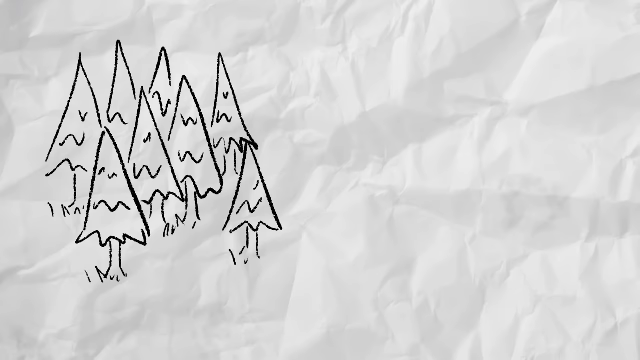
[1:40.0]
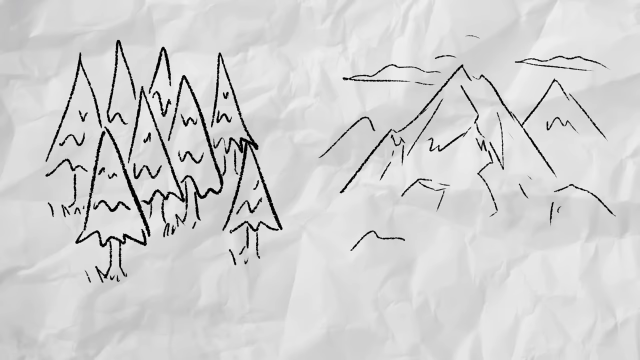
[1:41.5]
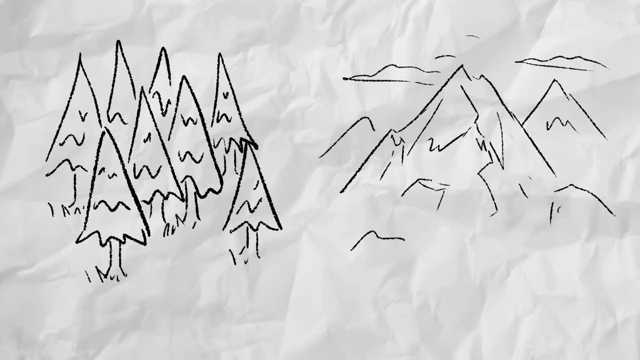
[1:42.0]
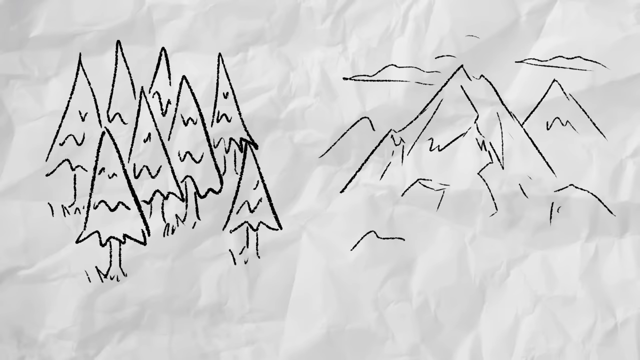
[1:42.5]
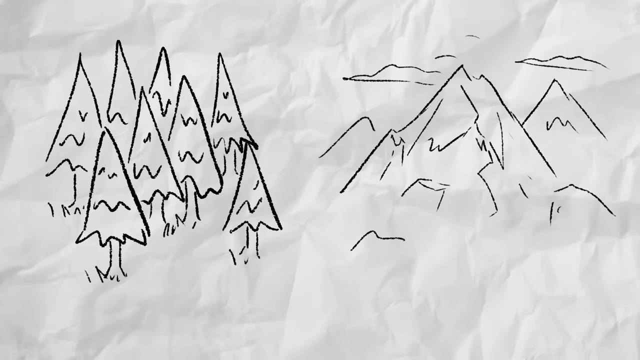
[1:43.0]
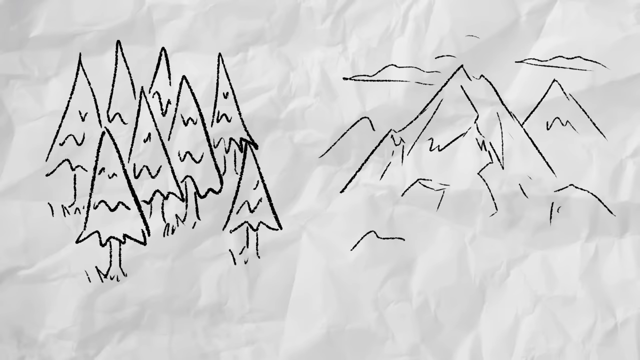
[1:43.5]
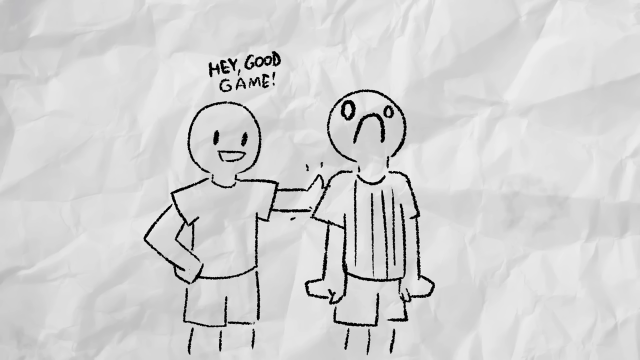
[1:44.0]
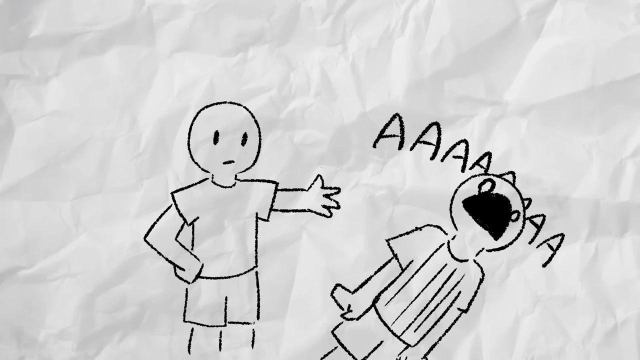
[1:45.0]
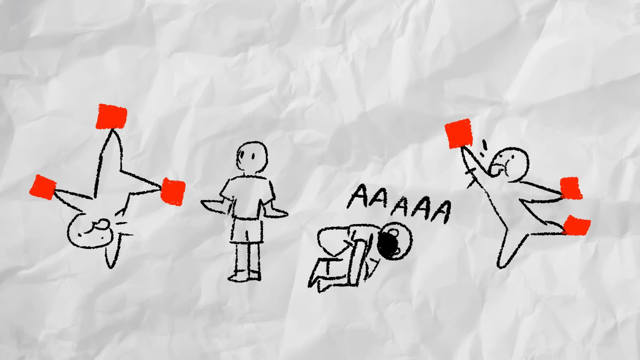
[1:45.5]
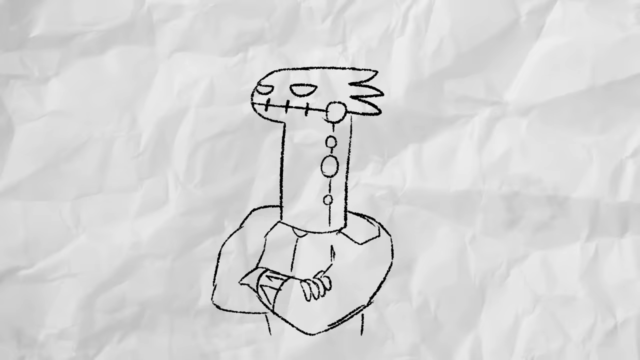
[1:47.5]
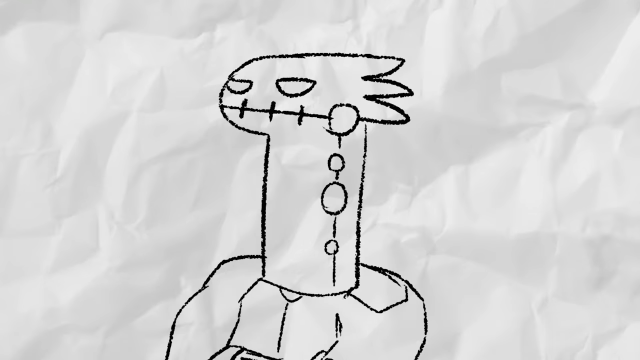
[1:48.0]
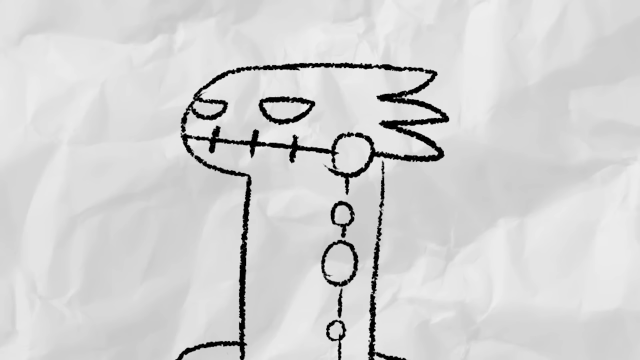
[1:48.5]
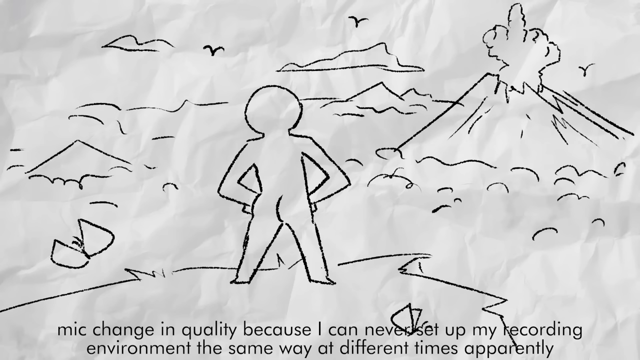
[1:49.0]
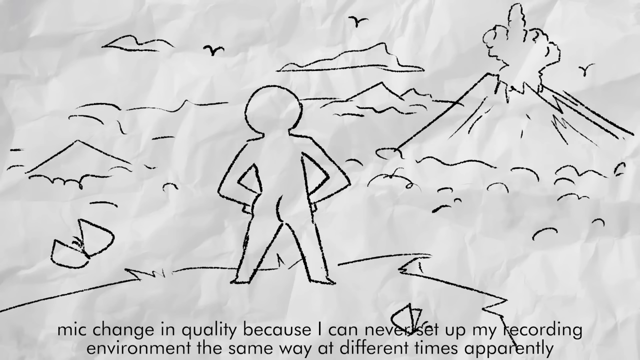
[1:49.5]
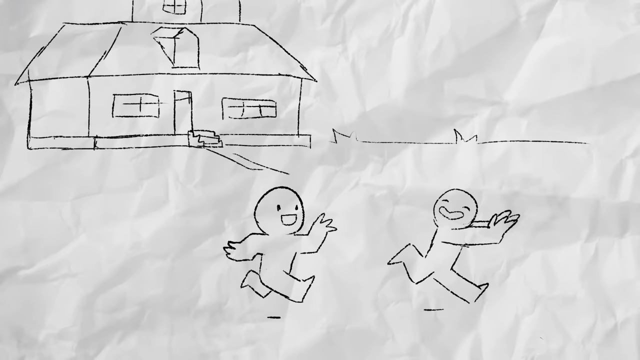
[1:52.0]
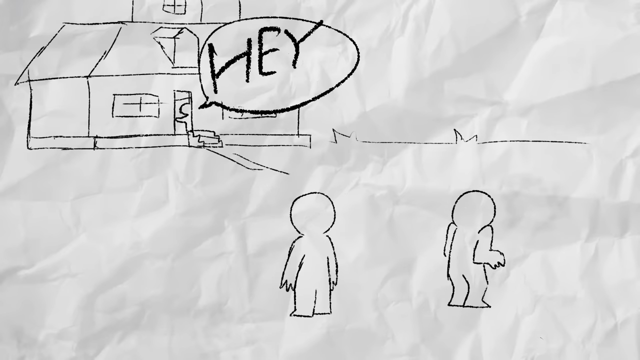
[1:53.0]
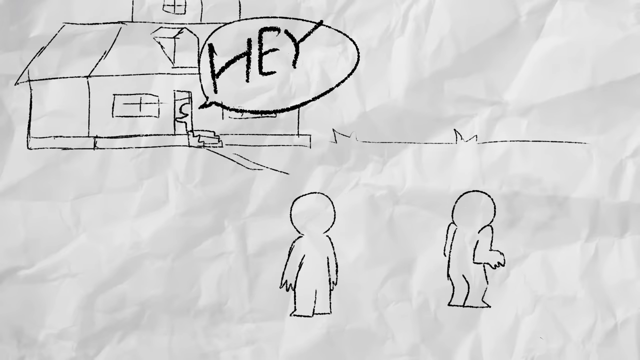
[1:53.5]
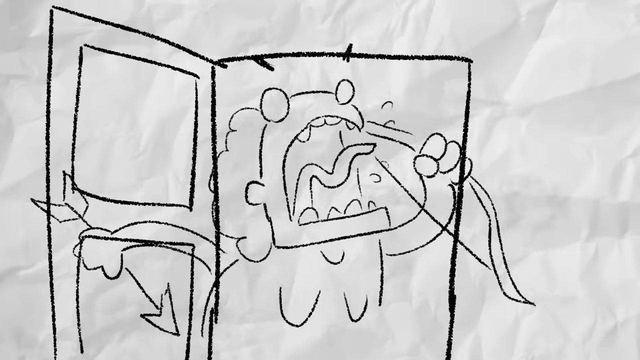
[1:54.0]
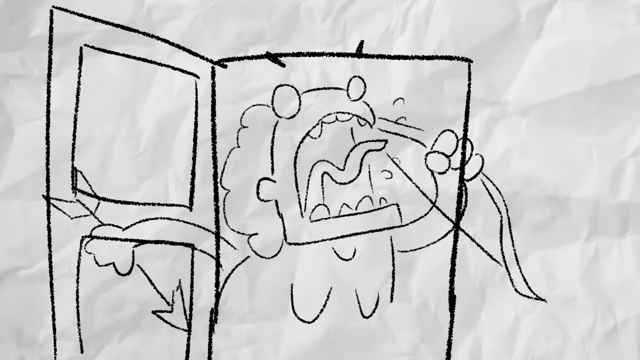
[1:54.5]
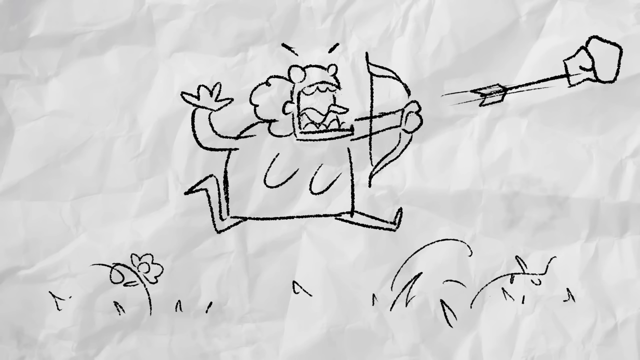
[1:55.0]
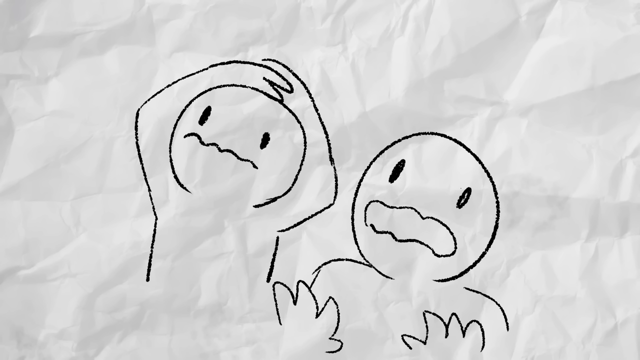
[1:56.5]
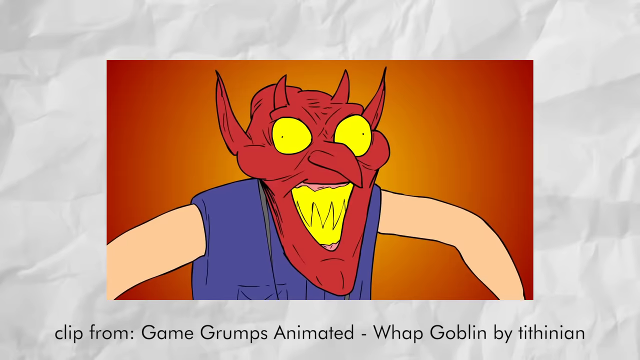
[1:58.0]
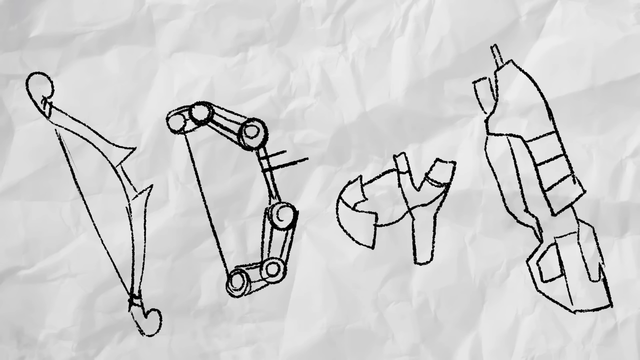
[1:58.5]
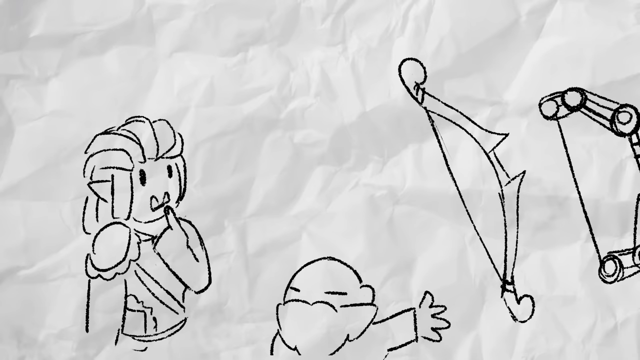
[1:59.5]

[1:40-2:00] Somebody in the back says "hey," and a person falls over, looking very straightforward and hurt. Two people on the right and left sides hold red cards. It cuts to the legit guy looking very disappointed, then to somebody standing on a hill, looking across an area with an erupting volcano. Text says "mic change in quality because I can never set up my recording." Two people run from a house while a very angry person at the door of the house shouts at them. The camera shifts to the two people, who are incredibly nervous, and then cuts to an image of the face of a red devil.